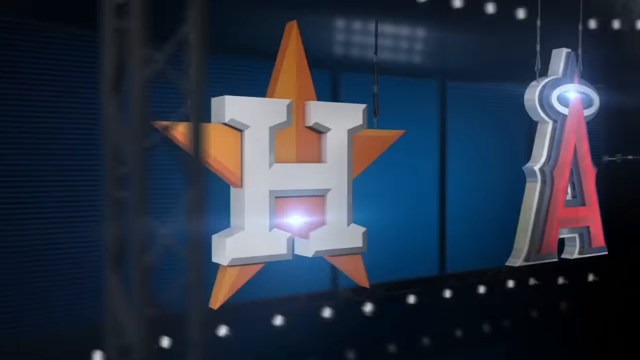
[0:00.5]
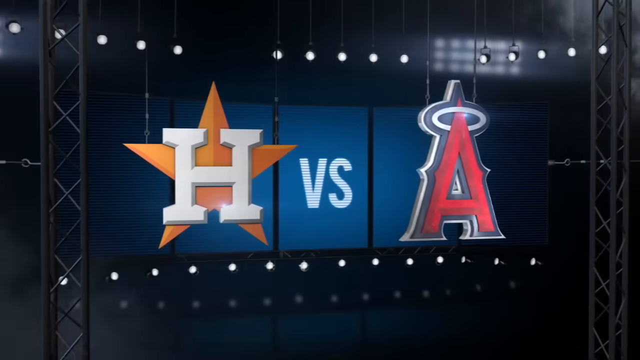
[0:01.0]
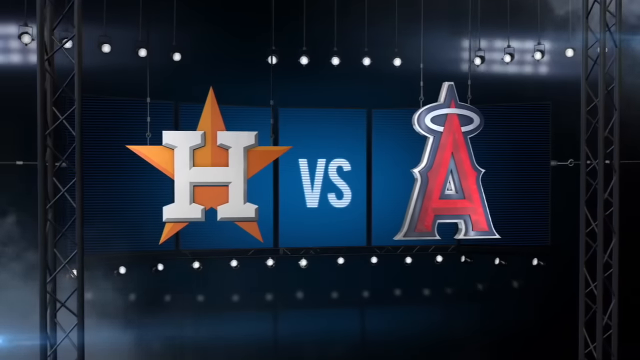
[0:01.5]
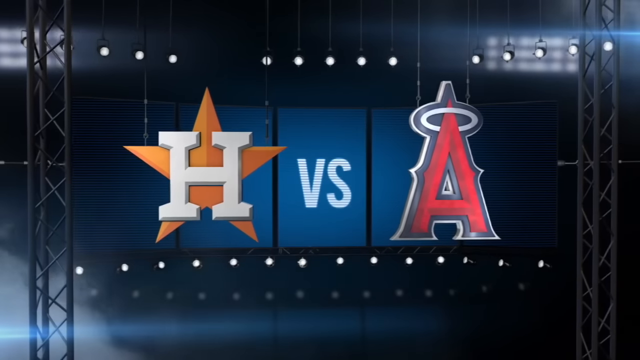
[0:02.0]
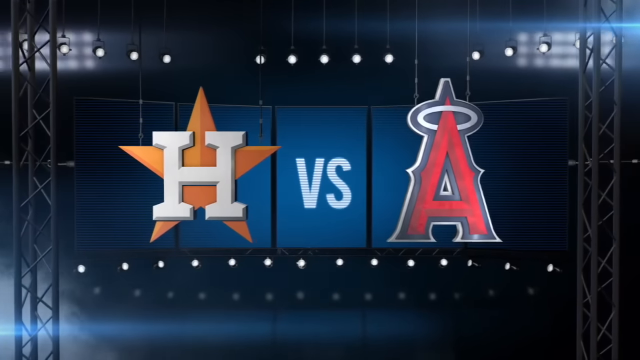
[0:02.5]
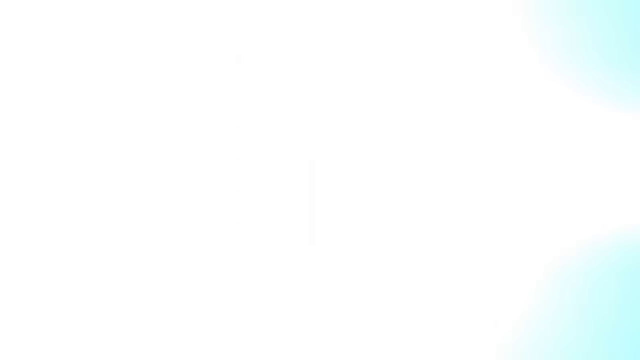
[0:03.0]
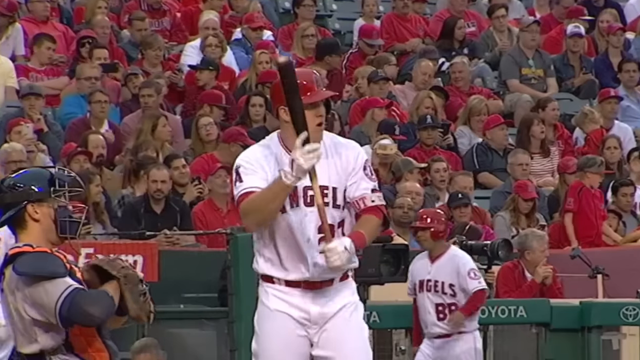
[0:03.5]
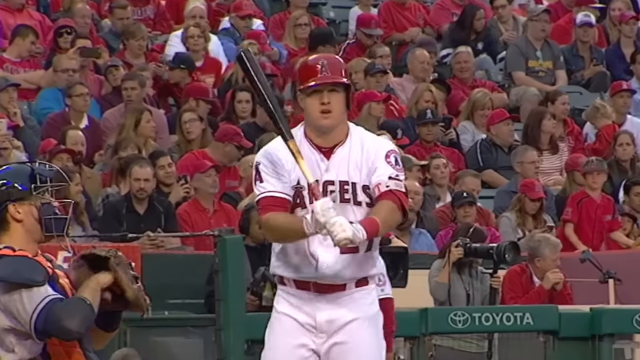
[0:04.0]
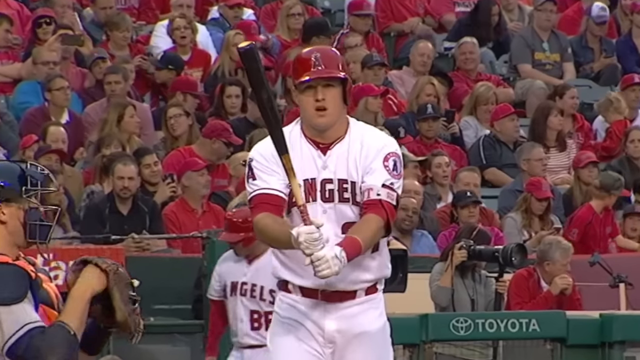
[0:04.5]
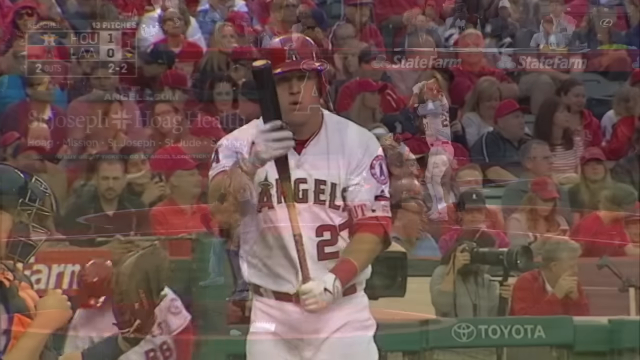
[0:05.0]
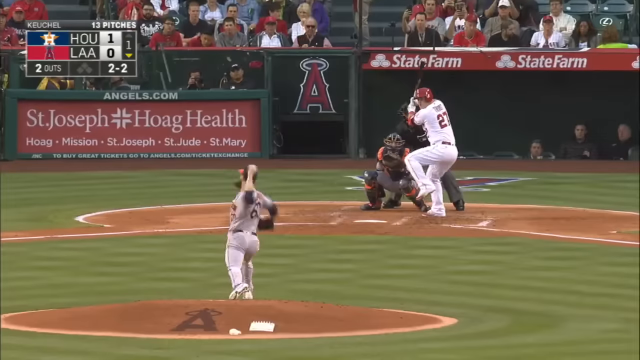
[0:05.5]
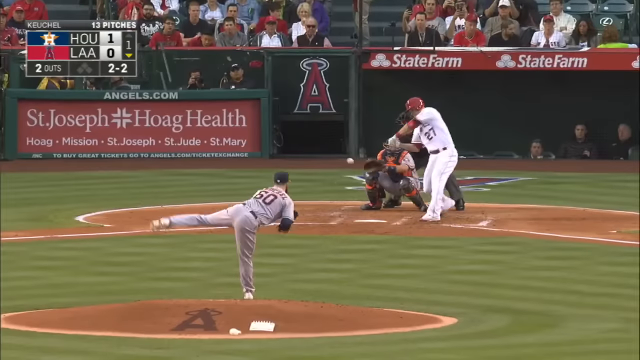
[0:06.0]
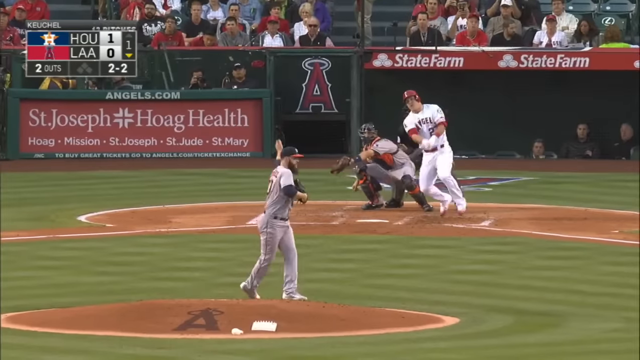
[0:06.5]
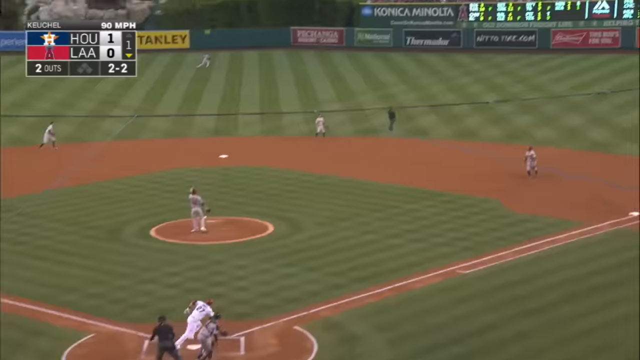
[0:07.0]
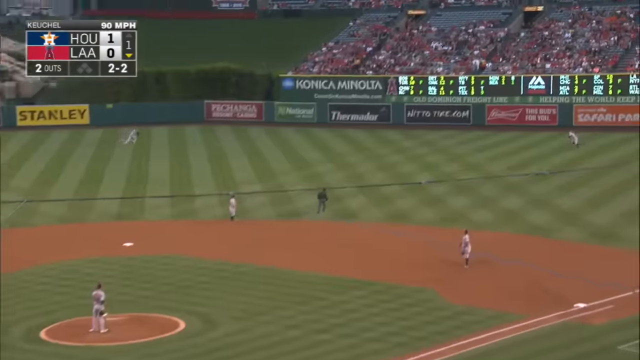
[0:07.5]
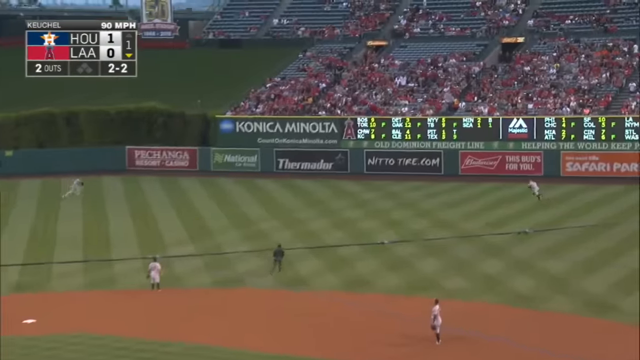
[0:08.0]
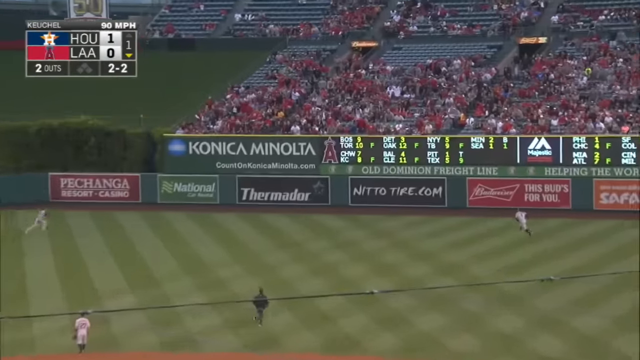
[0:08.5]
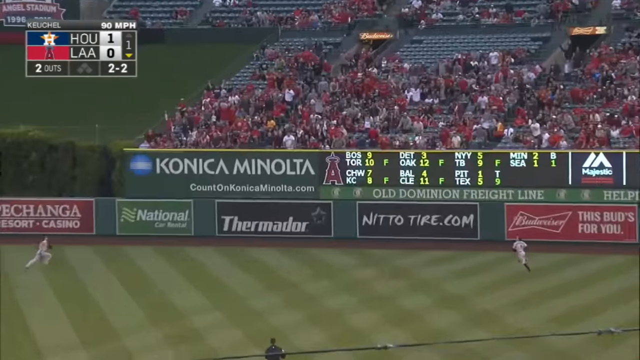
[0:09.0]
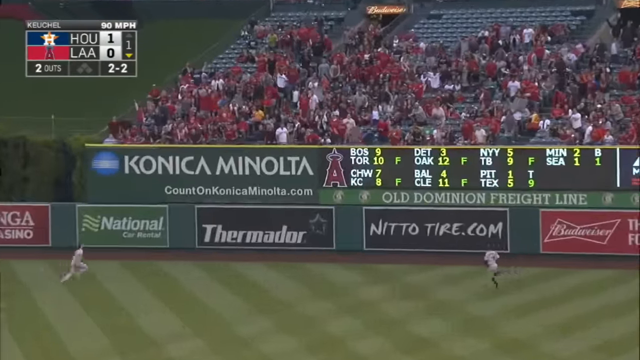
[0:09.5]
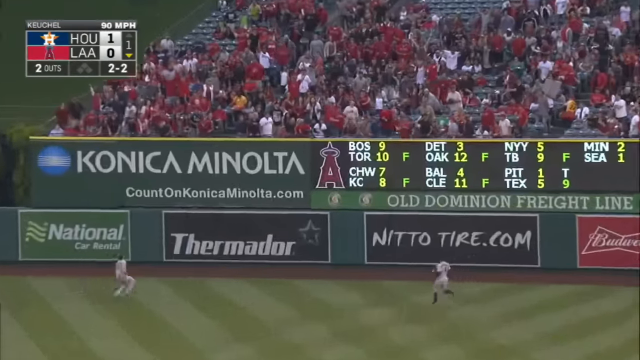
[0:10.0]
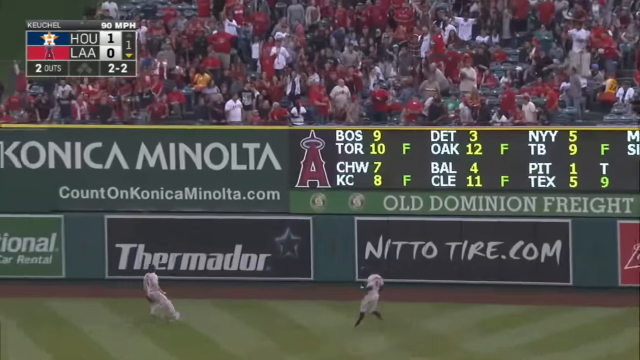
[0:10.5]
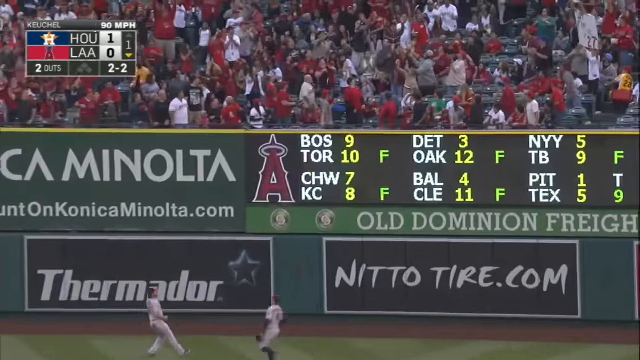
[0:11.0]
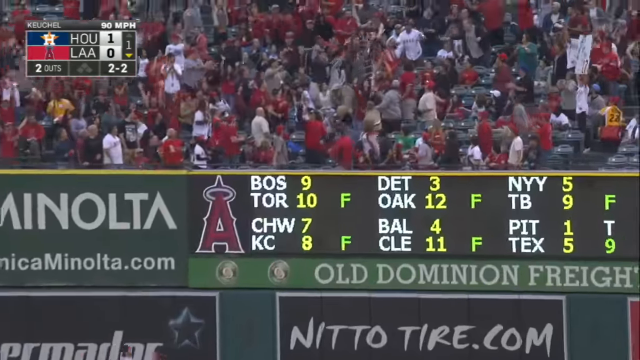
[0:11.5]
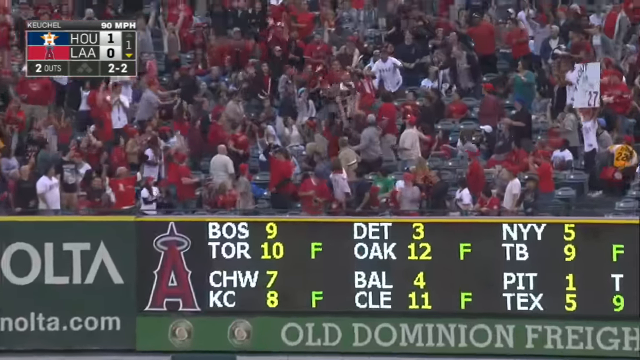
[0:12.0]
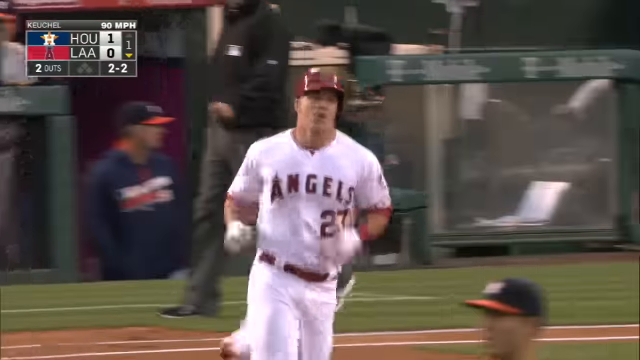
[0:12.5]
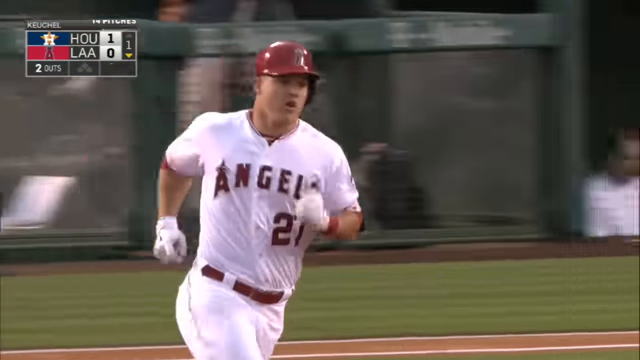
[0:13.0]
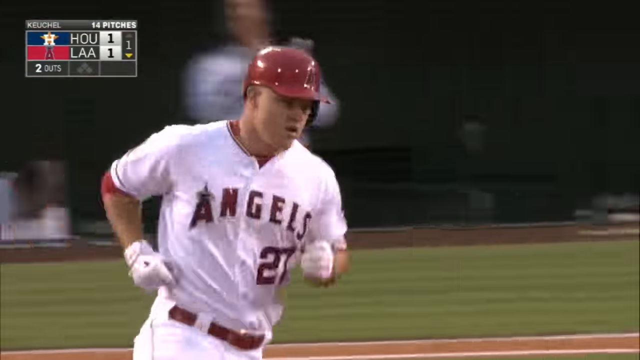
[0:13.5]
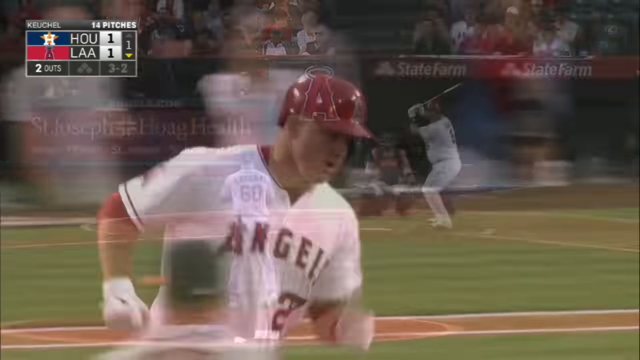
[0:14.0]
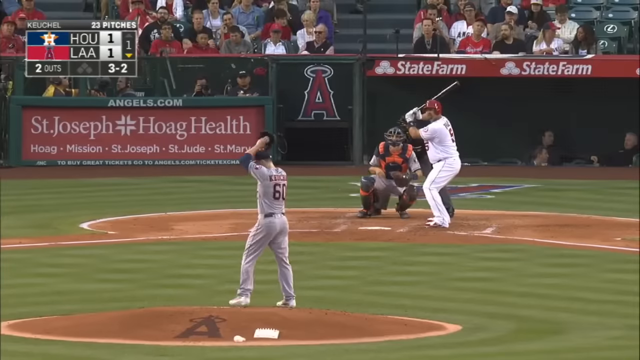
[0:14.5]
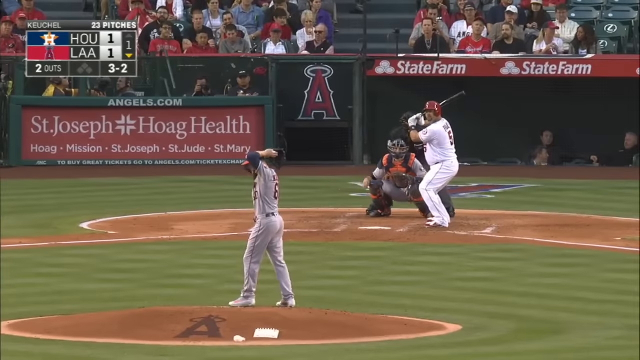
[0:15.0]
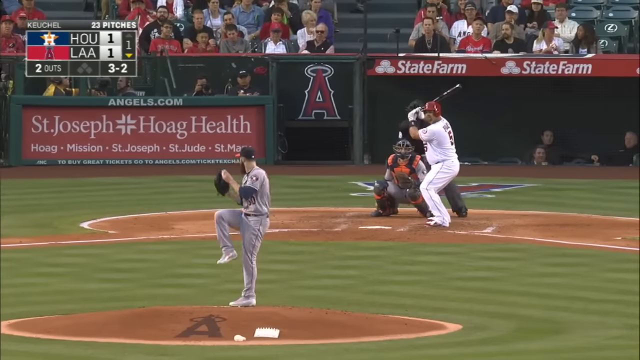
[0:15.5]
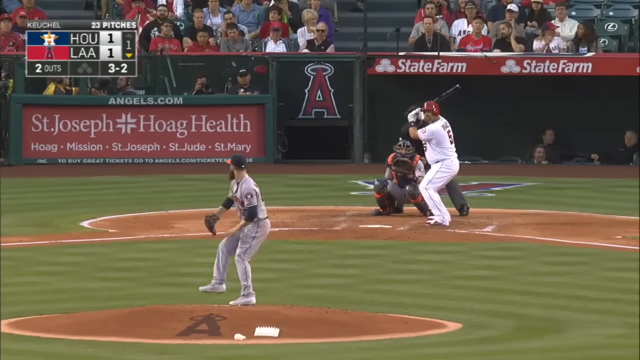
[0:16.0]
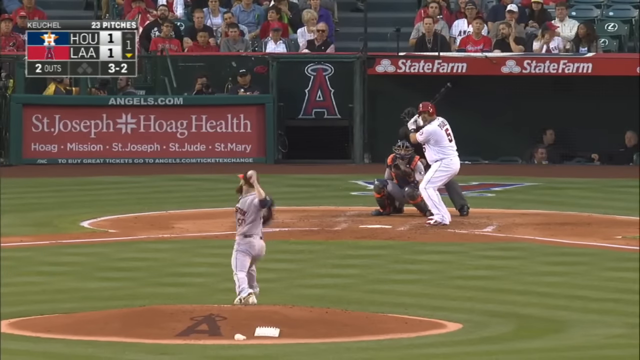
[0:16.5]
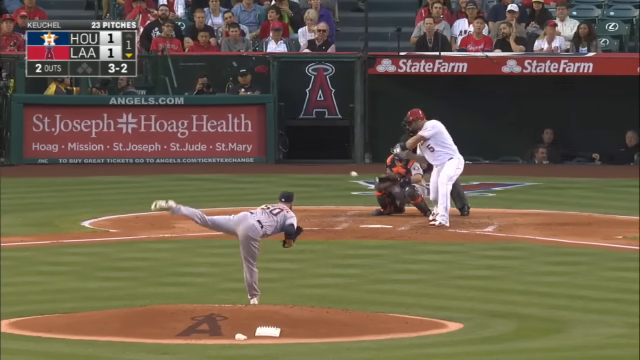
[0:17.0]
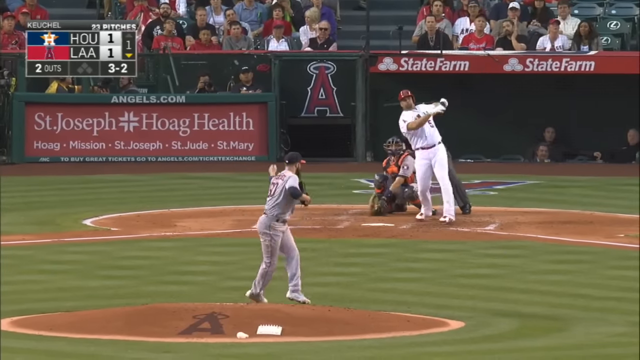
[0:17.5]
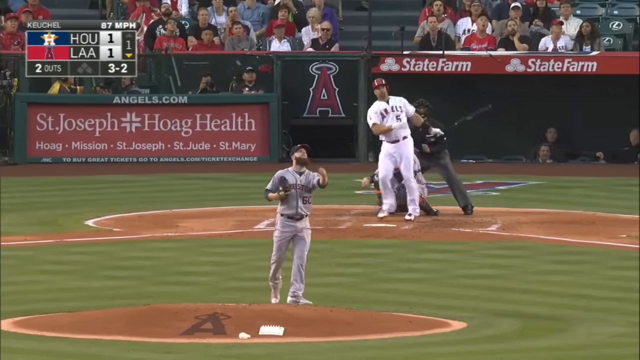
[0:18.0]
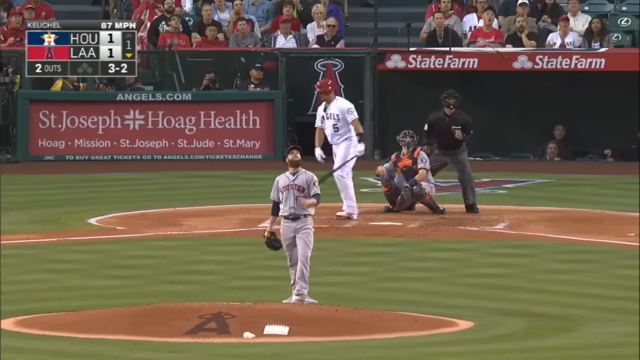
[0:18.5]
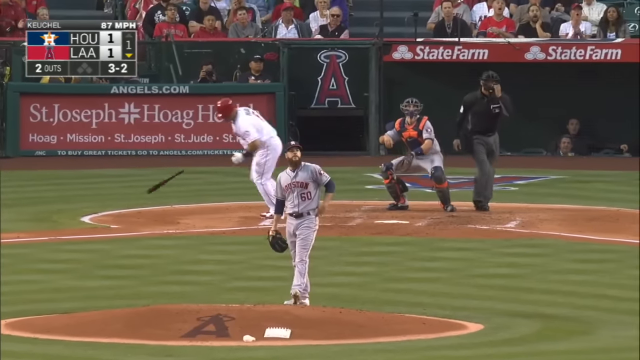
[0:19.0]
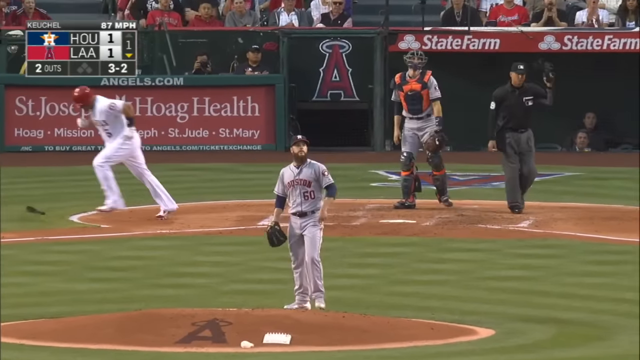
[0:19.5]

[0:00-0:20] A sports graphic opens the video. On the left is a gold star with a white H in front of it. On the right is a red letter A with a blue and white outline and an angelic halo at its top. Between them are the two white letters "BS". The camera slowly orbits around the graphic, then a bright light appears and the video transitions to action from a baseball game. A player in a red and white jersey holds a bat with both hands. The view changes to a behind view of a pitcher standing on the mound, bringing his left hand back as he throws the ball toward the plate. The batter swings and makes contact, and the ball flies to the outfield. The center fielder and right fielder run toward each other trying to catch up to the ball, but it lands over the fence and into the stands for a home run. A player in a white jersey runs around the bases. The scene then changes to the pitcher on the mound winding up and throwing toward home plate as another batter makes contact and hits the ball high into the air.